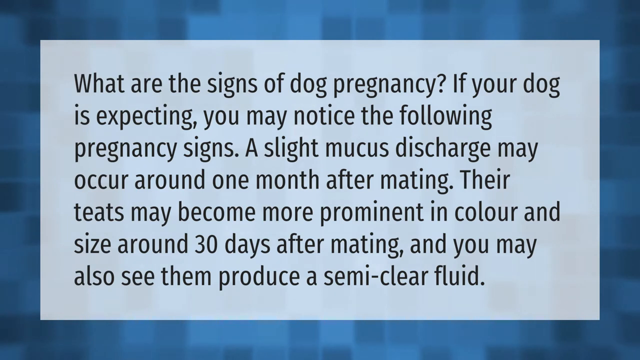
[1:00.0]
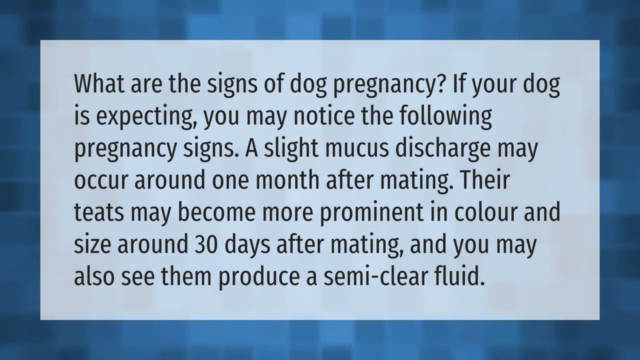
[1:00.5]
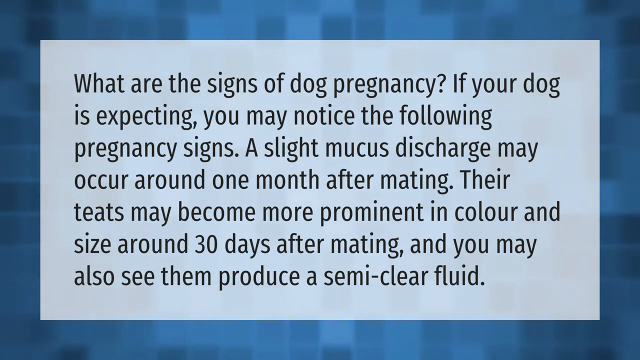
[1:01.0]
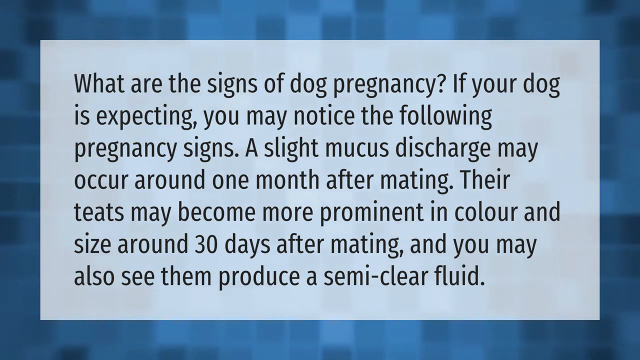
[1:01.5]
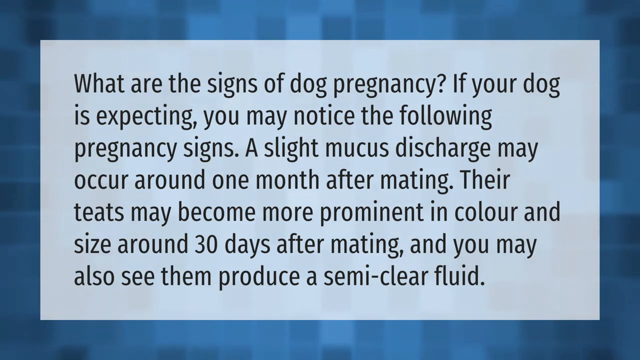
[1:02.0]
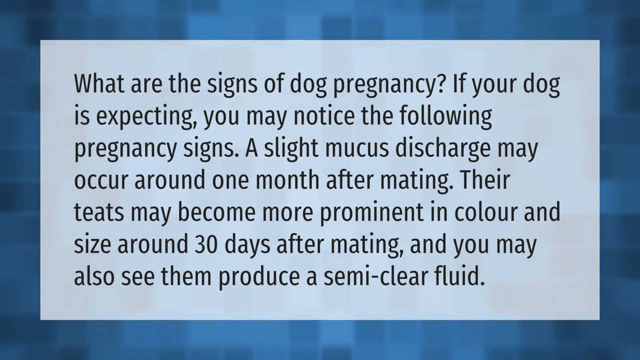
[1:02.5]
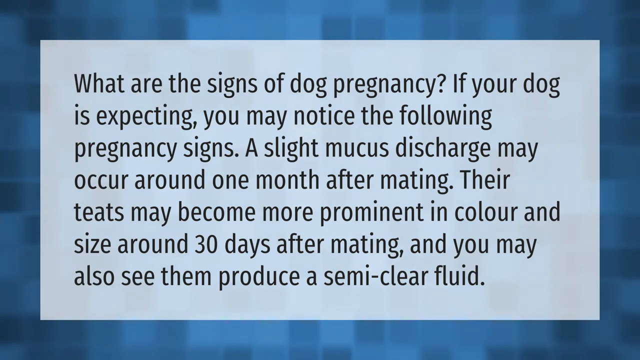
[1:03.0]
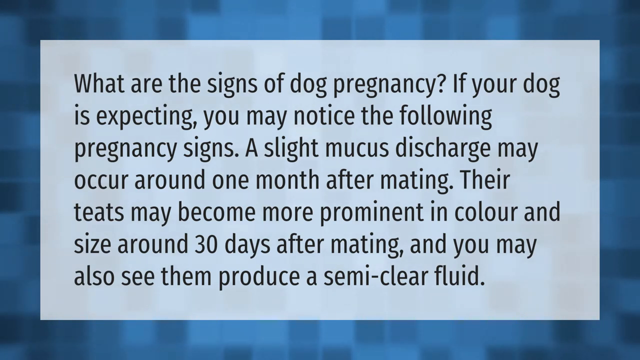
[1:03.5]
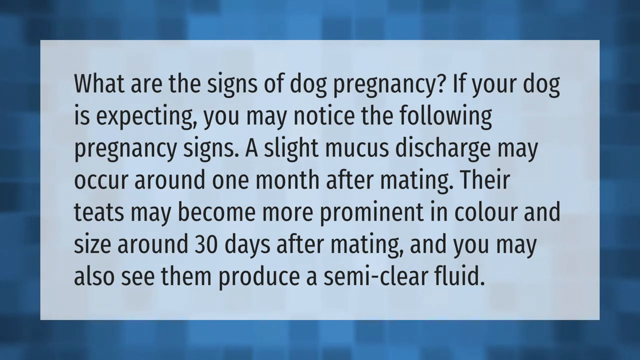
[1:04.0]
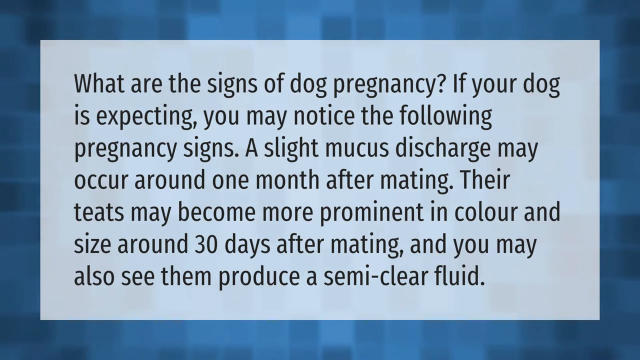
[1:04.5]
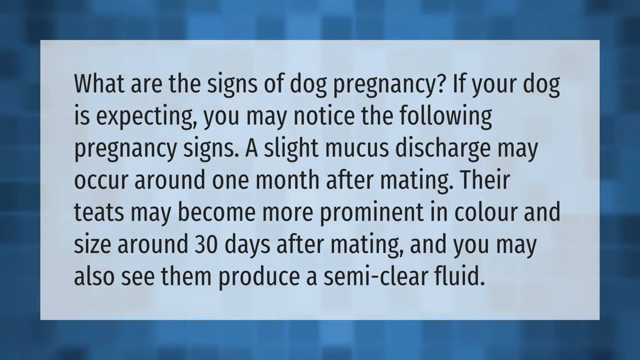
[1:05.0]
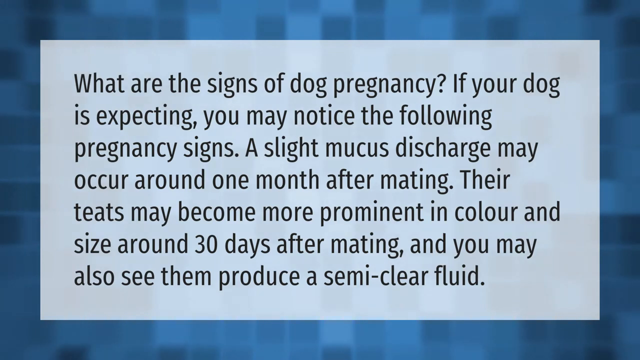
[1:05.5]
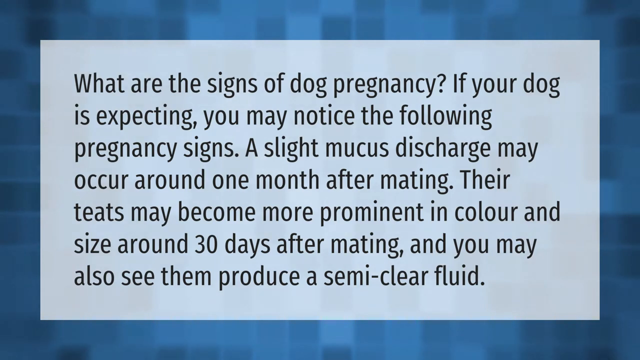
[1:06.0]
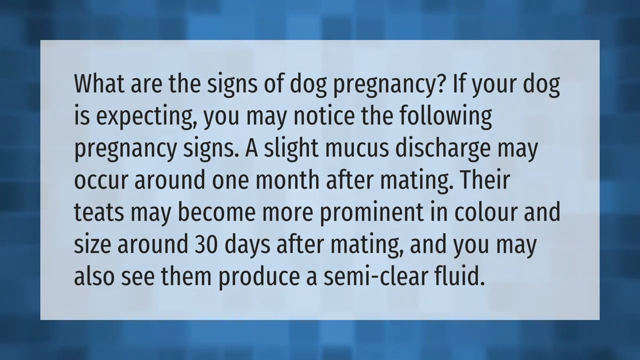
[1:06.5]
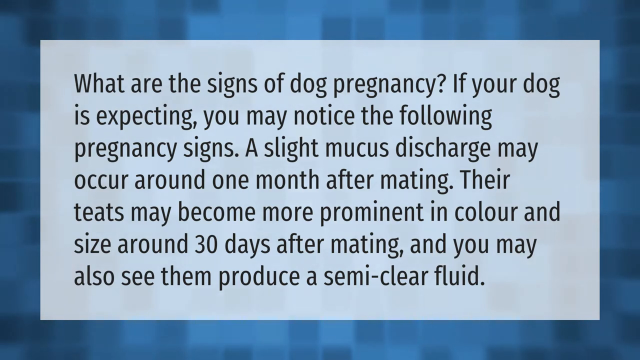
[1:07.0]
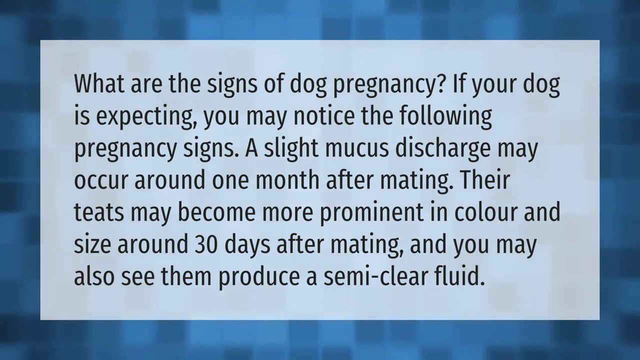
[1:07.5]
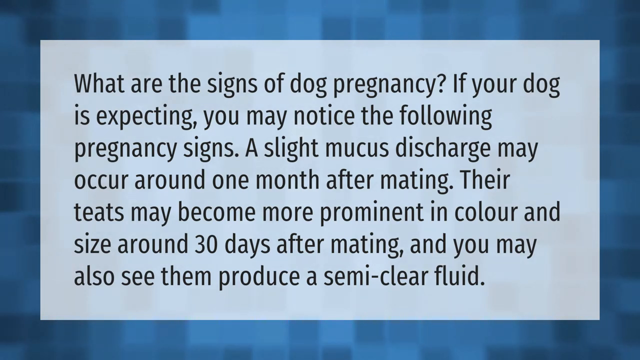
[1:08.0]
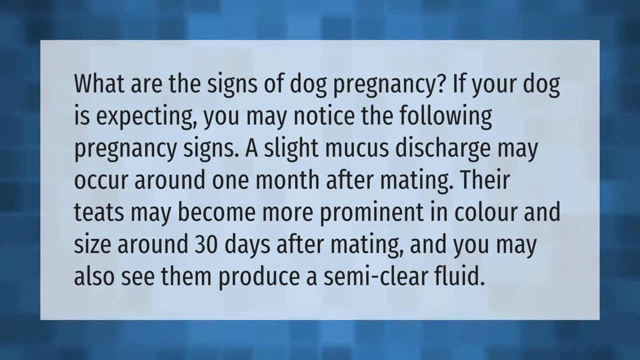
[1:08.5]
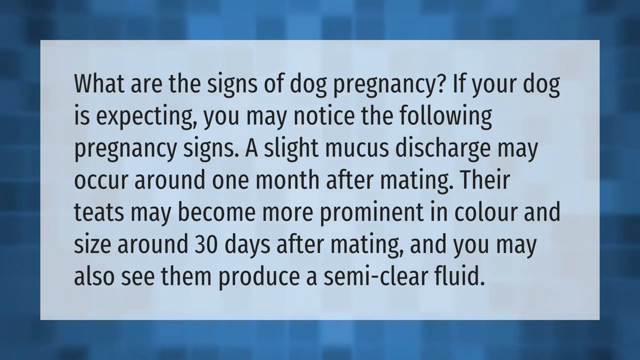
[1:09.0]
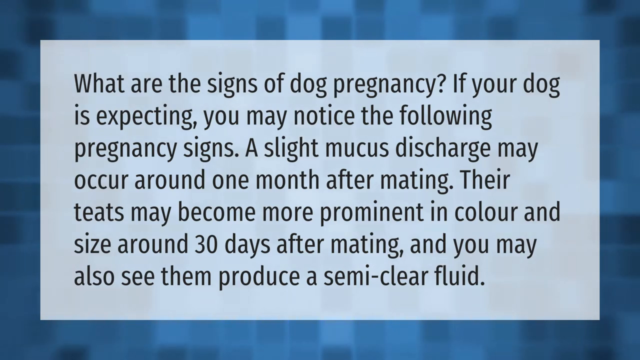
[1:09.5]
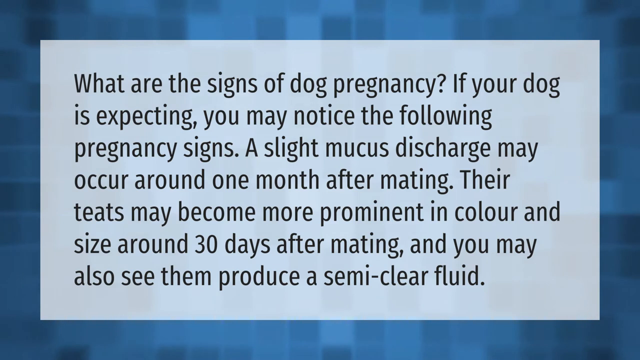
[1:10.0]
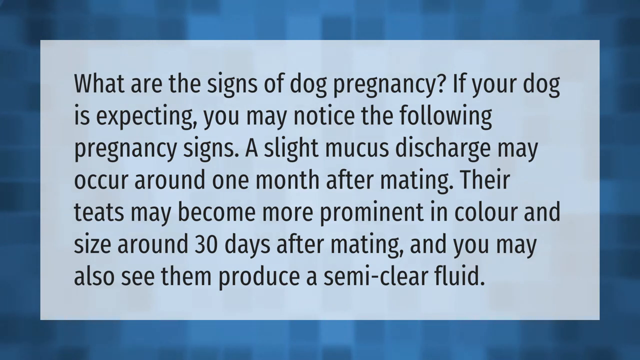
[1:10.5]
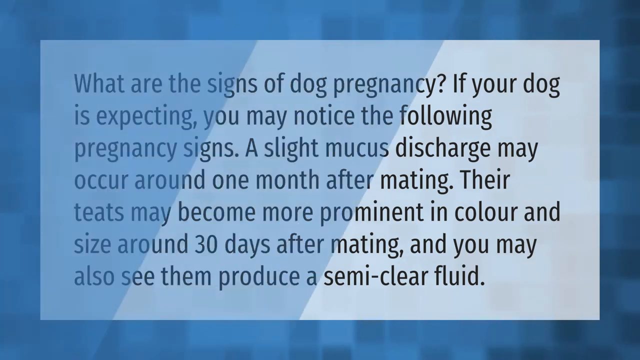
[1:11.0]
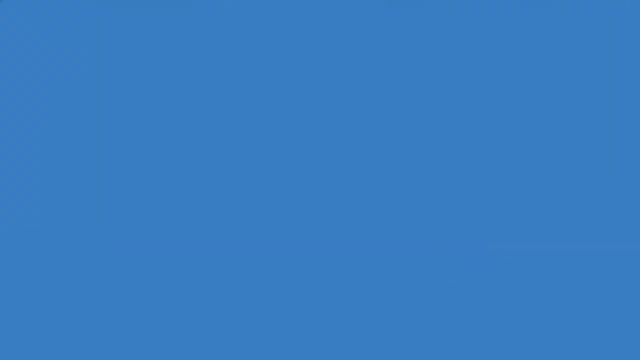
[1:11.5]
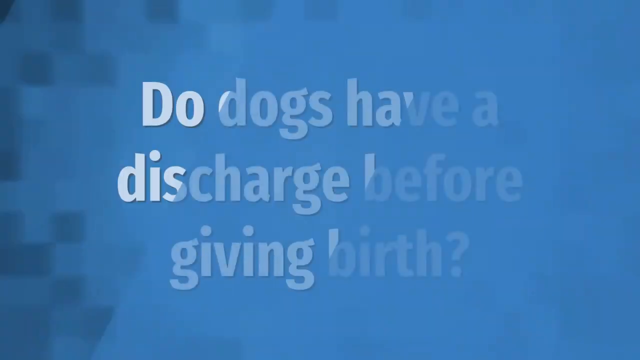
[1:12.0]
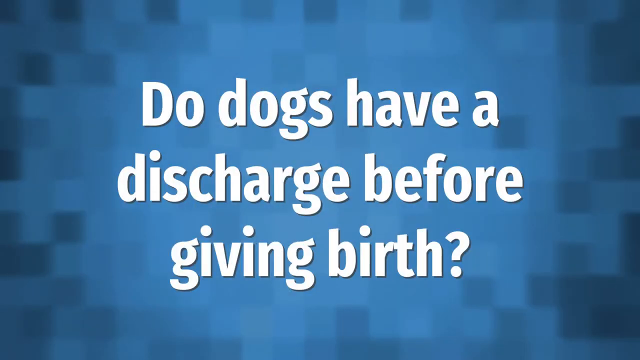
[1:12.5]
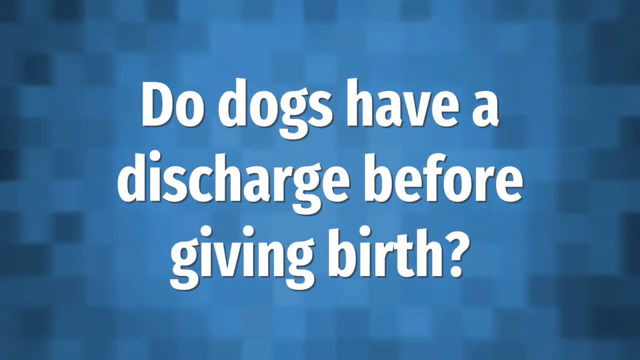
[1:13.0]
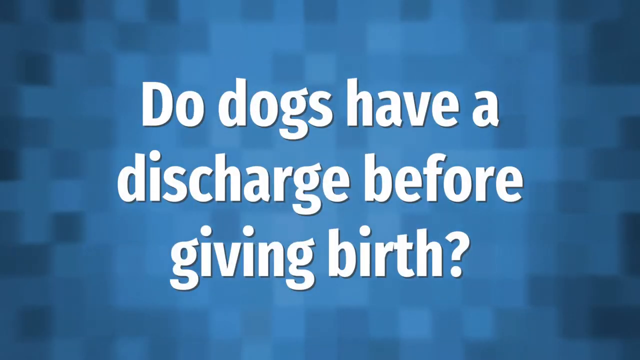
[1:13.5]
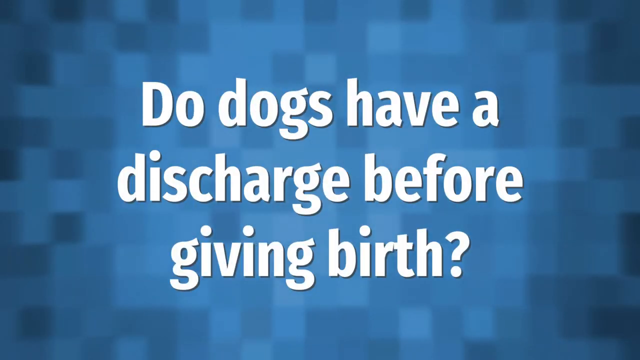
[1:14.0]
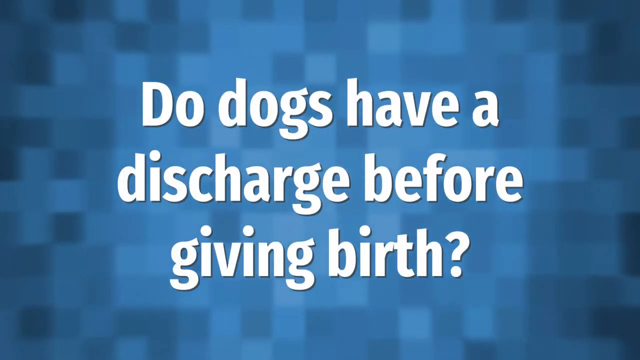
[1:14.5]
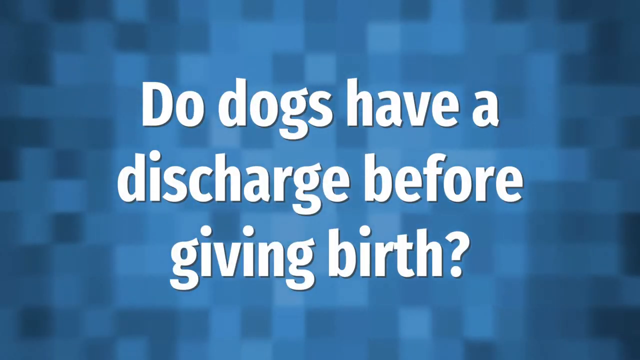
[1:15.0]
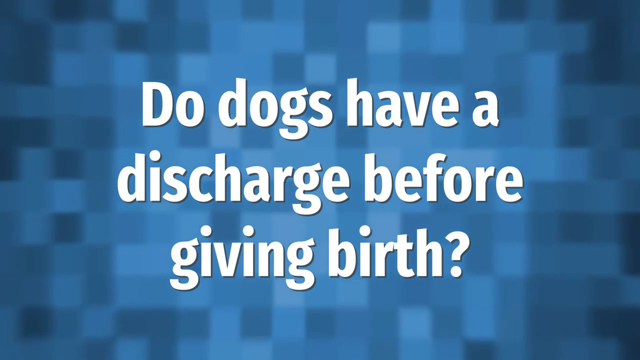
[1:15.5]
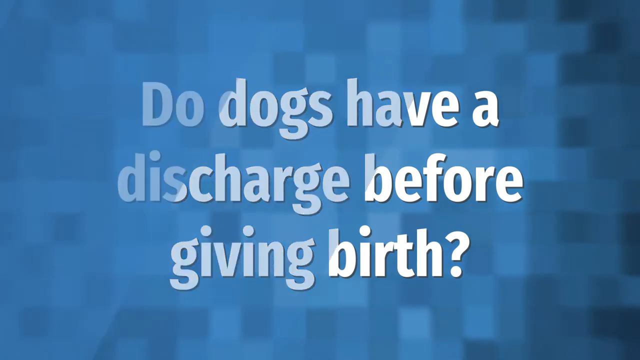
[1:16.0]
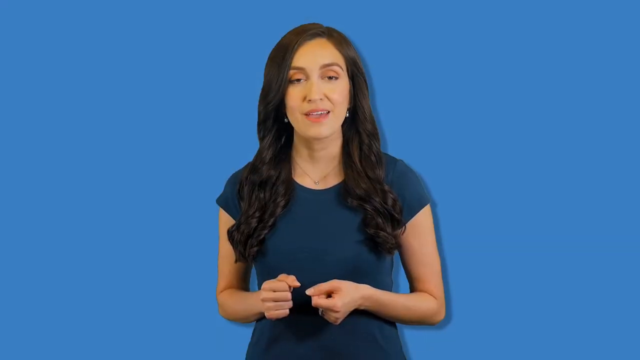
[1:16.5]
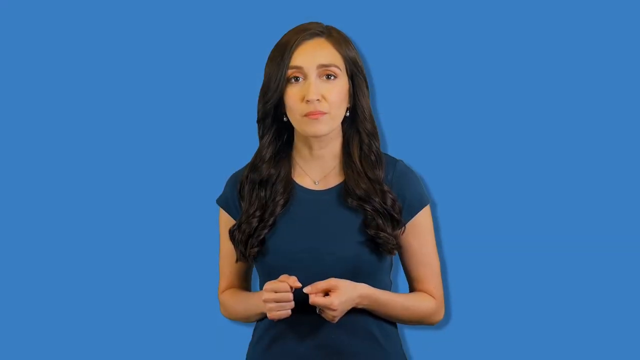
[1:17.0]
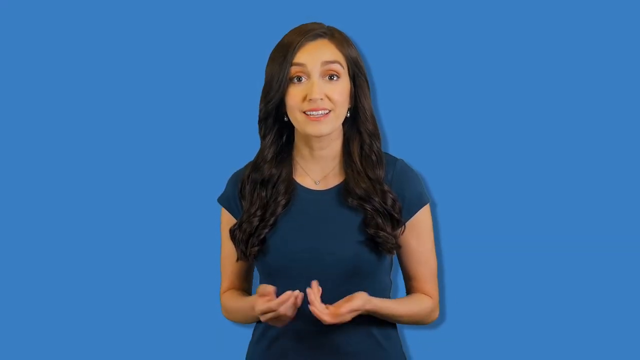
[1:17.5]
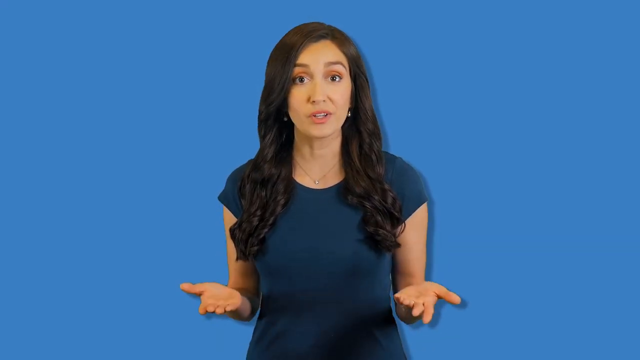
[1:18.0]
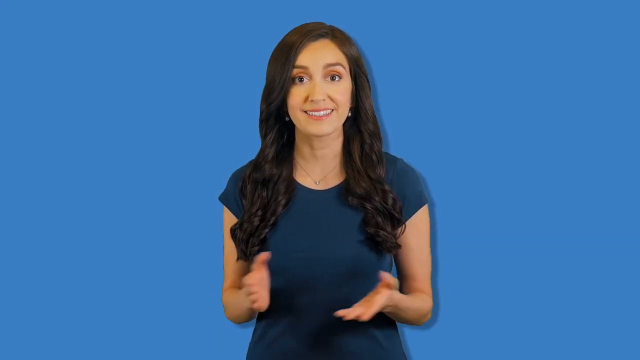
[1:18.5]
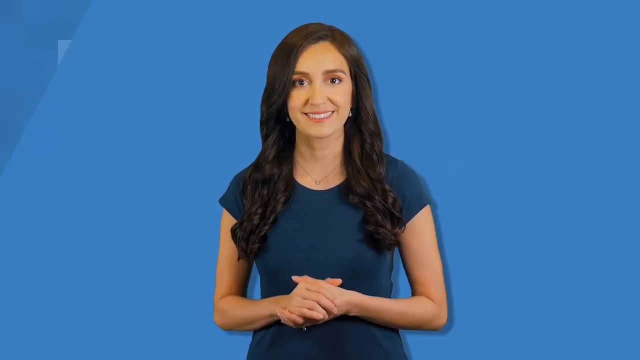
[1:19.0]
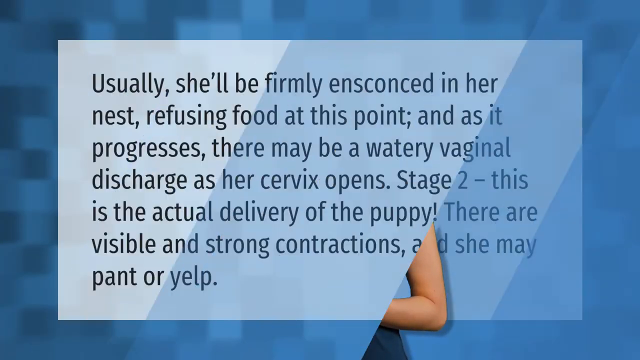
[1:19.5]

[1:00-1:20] The dark blue screen with dark-colored squares and a light blue rectangle reads "what are the signs of dog pregnancy. If your dog is expecting, you may notice the following pregnancy signs. A slight mucus discharge may occur around one month after mating. Their teats may become more prominent in color and size around 30 days after mating, and you may also see them produce a semi-clear liquid." It changes to a solid blue screen, then to the blue screen with dark-colored squares reading "do dogs have a discharge before giving birth." Next, the woman in a dark blue shirt appears on the solid blue screen, talking. It then changes to the blue screen with dark squares and a white rectangle in the middle, reading "usually she'll be firmly ensconced in her nest refusing food at this point and as it progresses there may be a watery vaginal discharge as her cervix opens stage two this is the actual delivery of the puppy there are visible and strong contractions and she may pant or yelp."